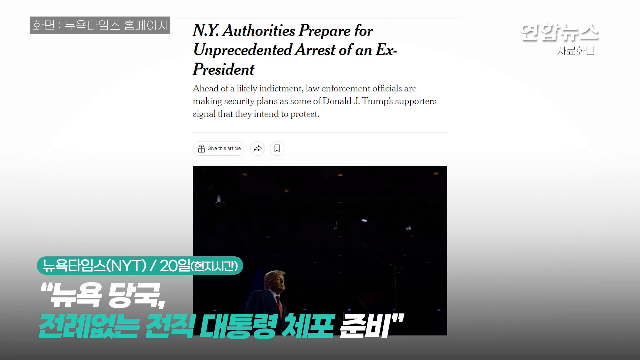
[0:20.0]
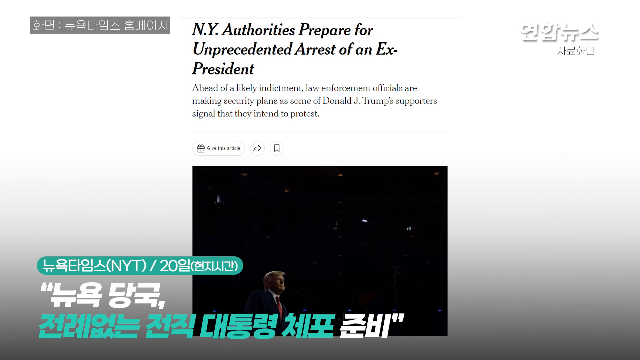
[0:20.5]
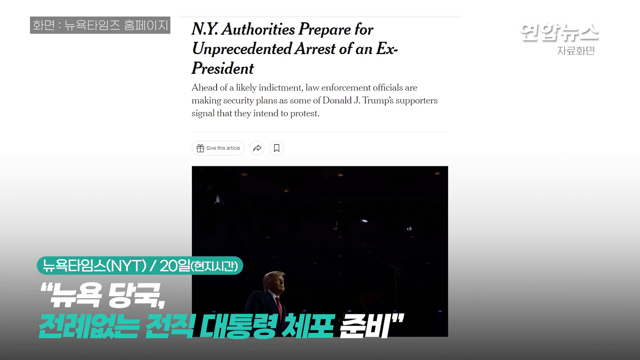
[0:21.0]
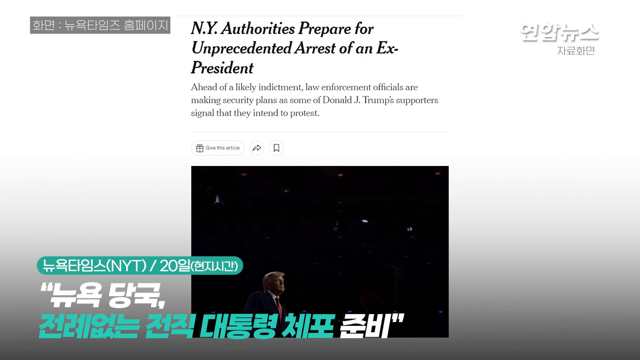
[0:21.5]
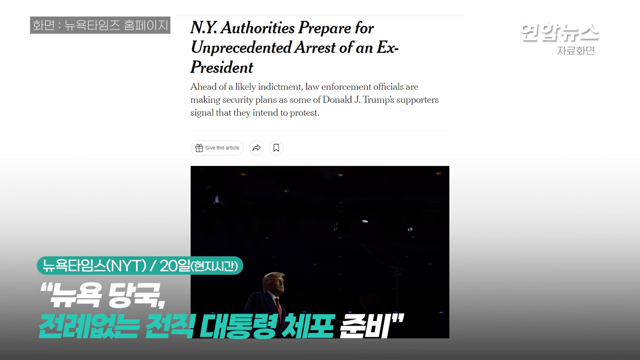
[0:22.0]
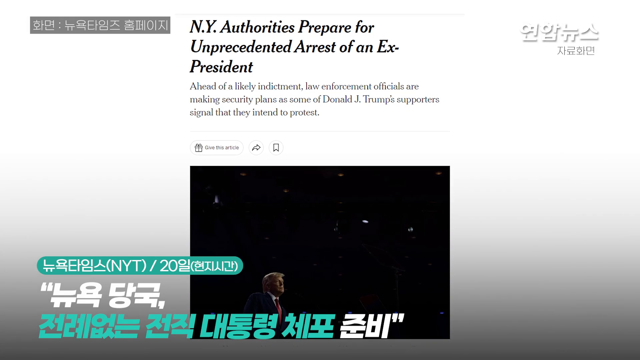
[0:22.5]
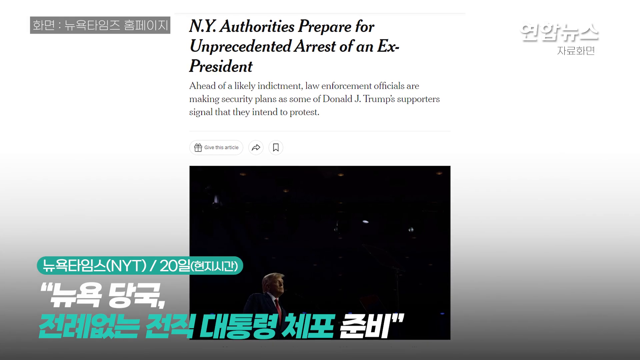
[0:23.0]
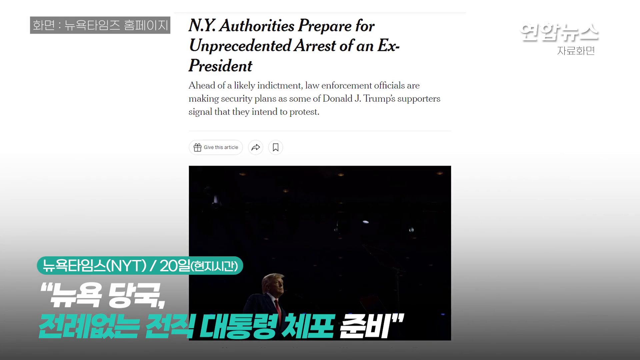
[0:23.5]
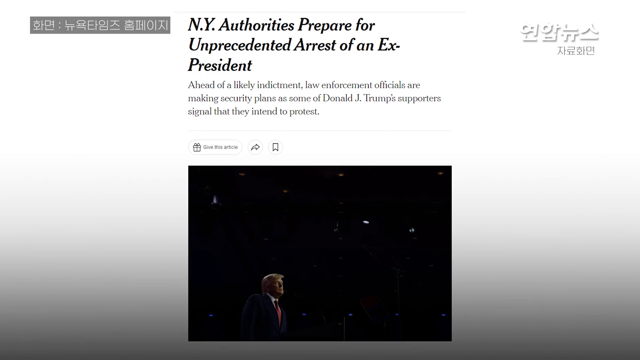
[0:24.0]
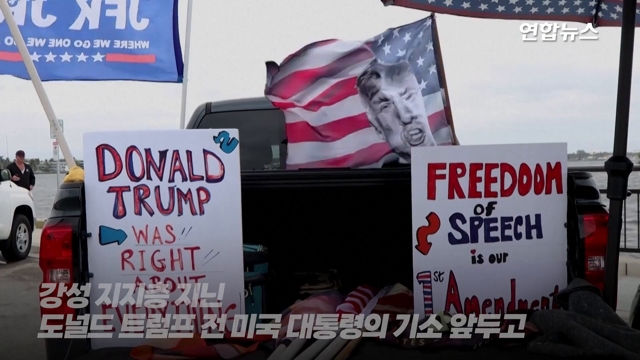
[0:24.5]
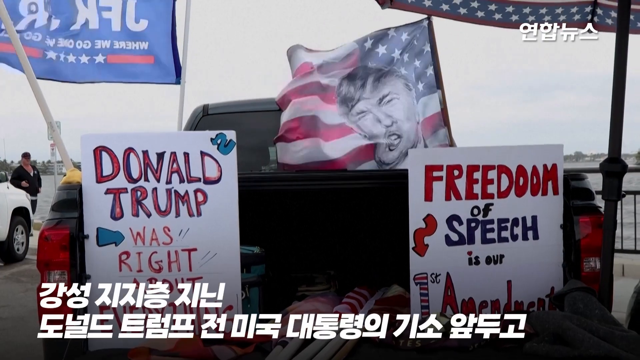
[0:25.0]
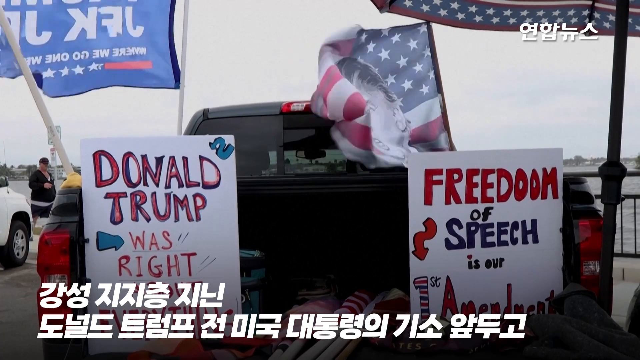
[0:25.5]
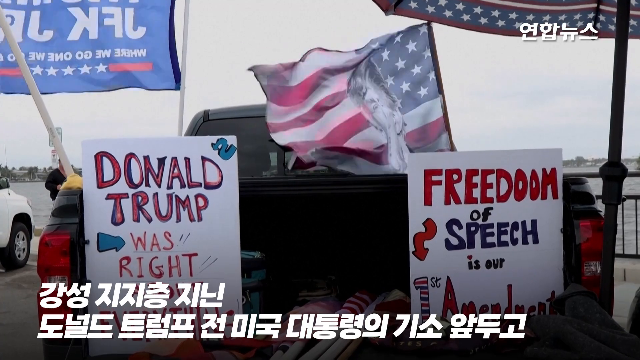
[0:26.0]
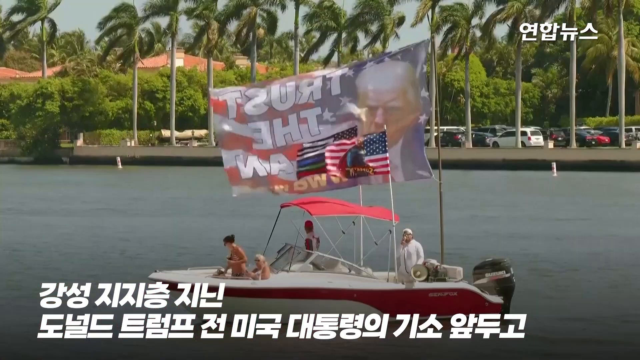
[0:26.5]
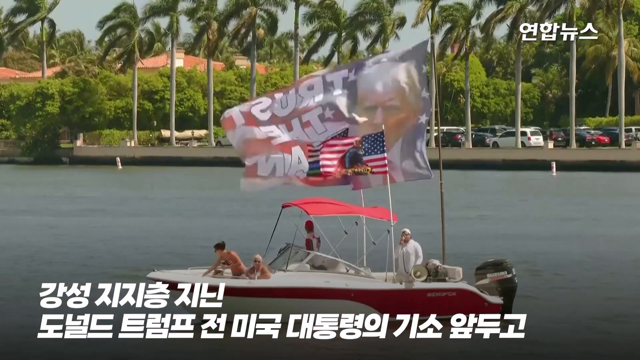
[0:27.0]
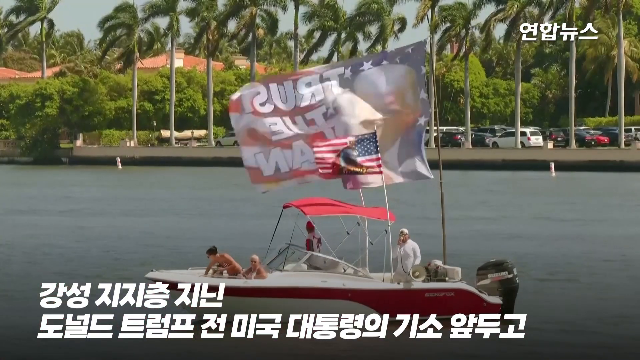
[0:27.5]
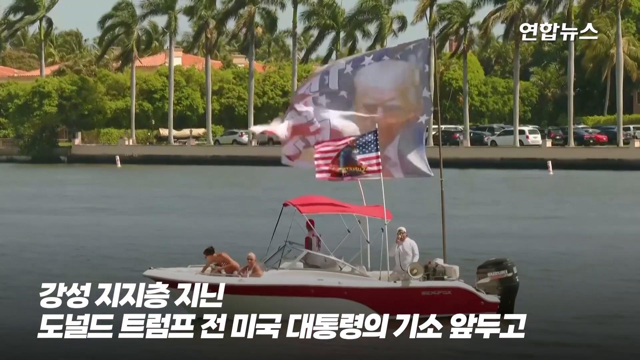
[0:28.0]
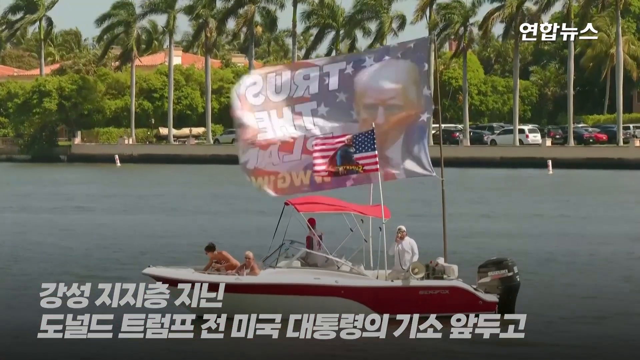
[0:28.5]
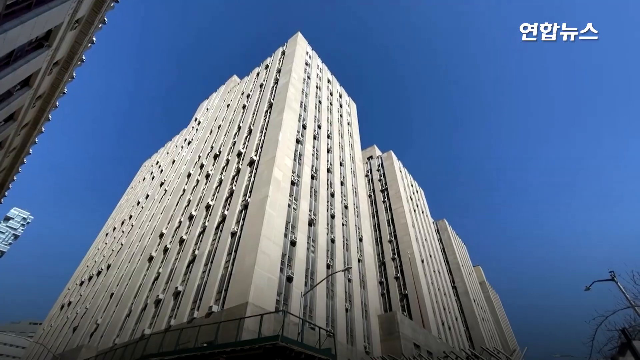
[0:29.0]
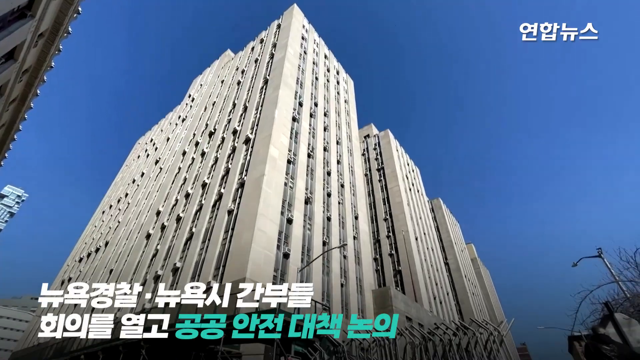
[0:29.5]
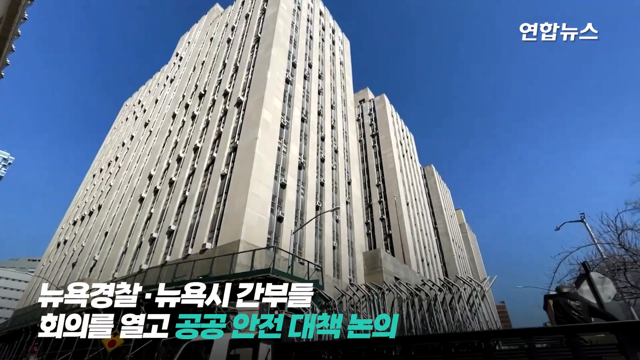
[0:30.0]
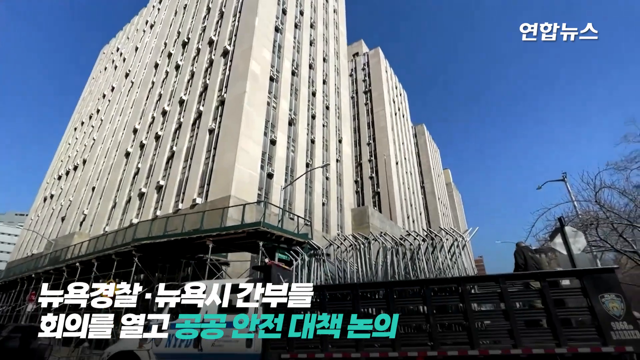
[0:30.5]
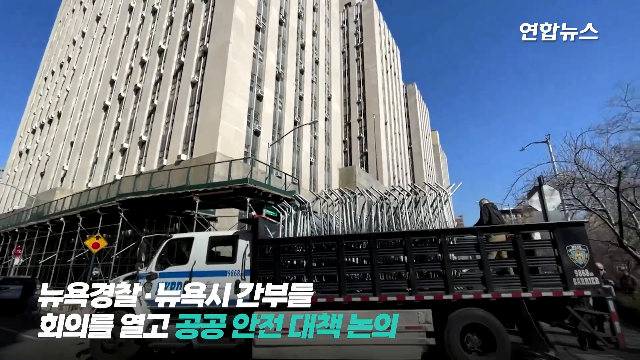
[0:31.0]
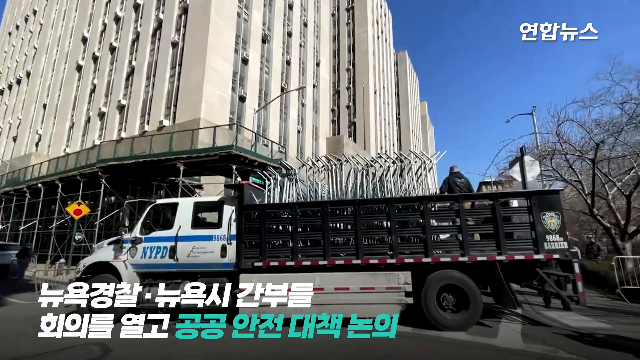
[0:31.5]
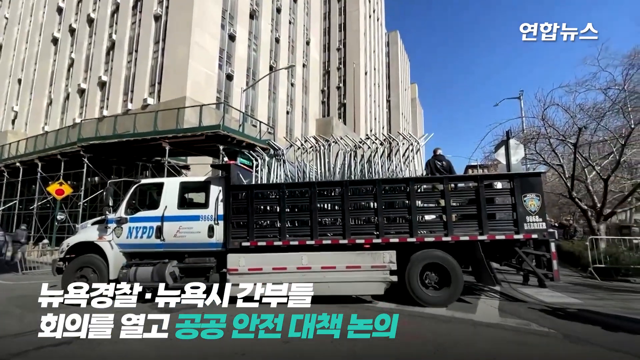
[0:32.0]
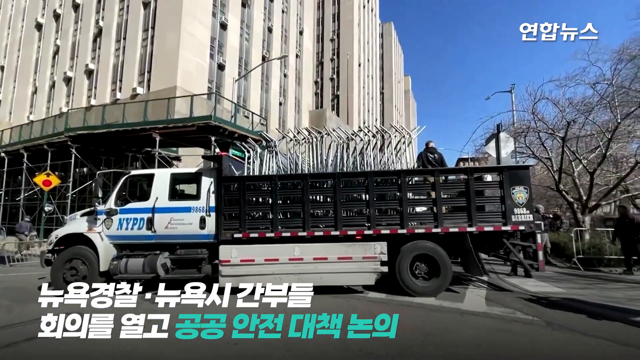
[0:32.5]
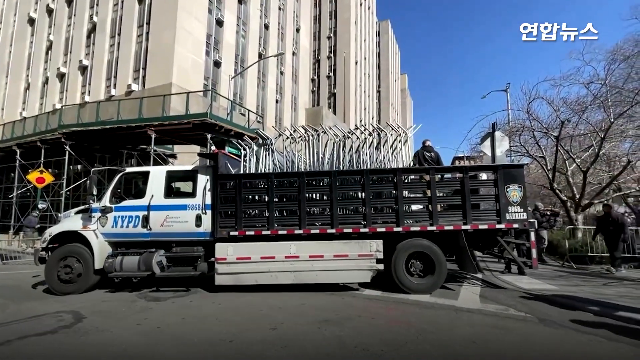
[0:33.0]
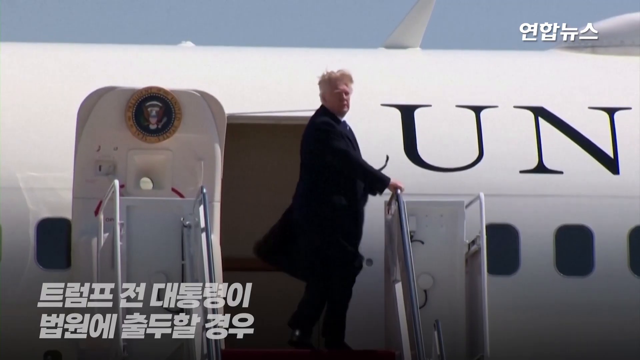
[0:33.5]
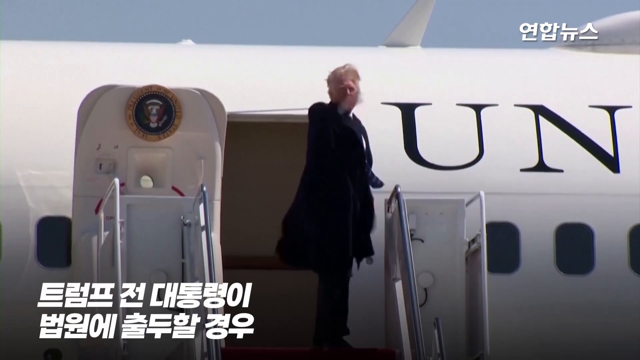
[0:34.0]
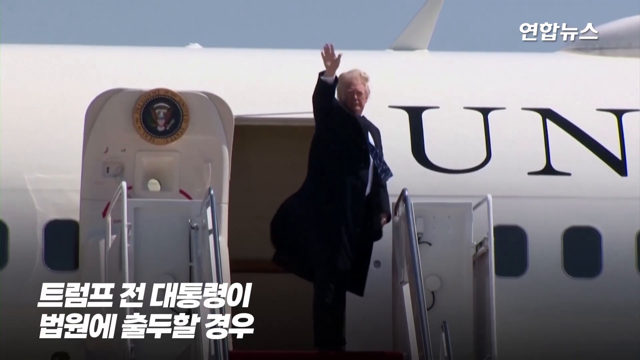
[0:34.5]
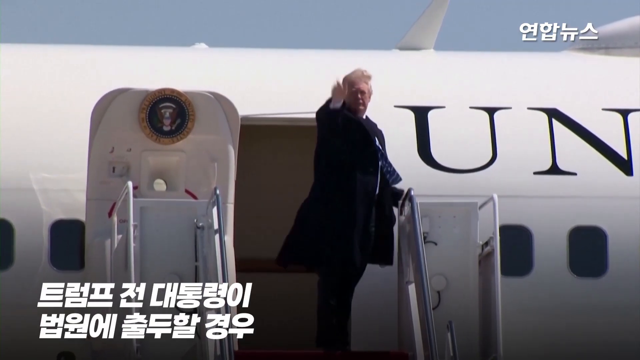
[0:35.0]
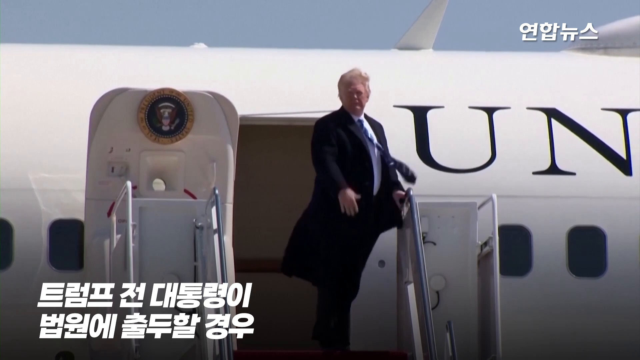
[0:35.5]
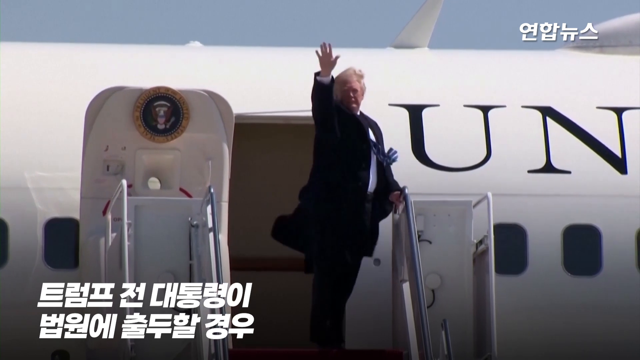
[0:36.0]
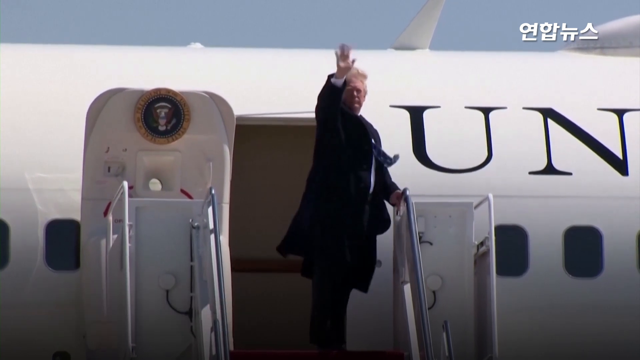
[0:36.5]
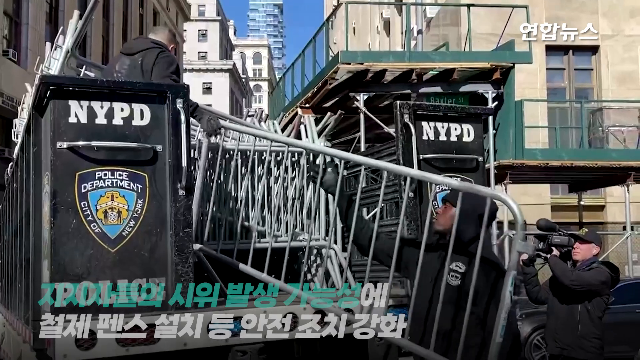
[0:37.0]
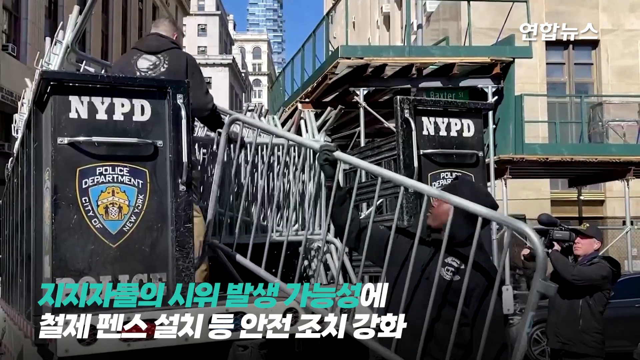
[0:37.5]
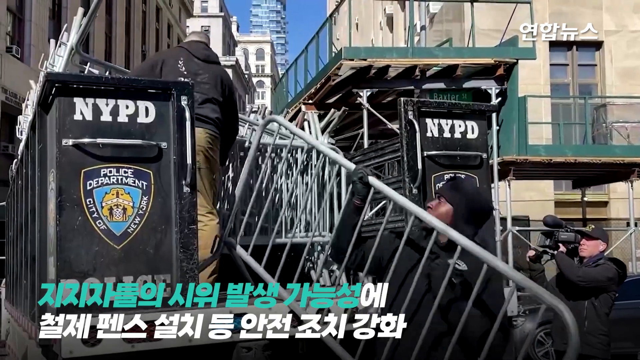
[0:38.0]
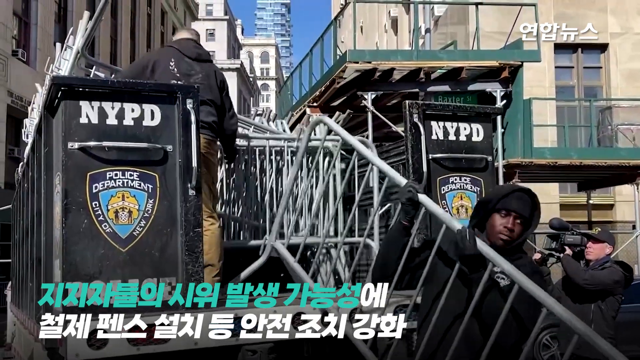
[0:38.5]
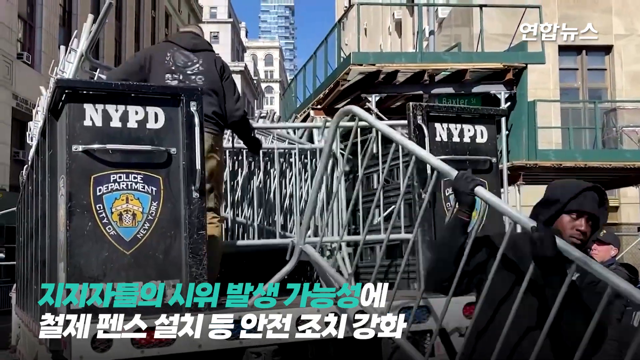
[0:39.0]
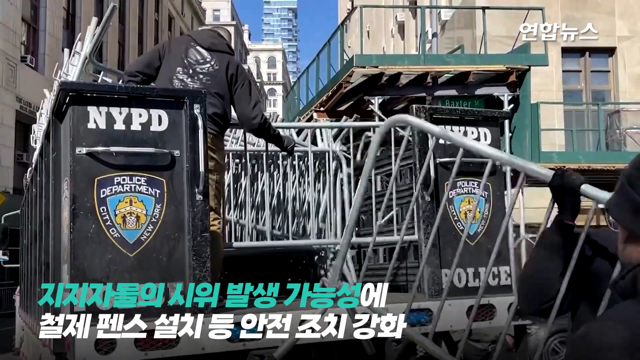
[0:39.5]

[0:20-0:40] The newscast shows text on screen: "New York authorities prepare for unprecedented arrest of an ex-president. Ahead of a likely indictment, law enforcement officials are making security plans as some of Donald J. Trump's supporters signal that they intend to protest." There is a glimpse of Mar-a-Lago, and then the video returns to New York City, where barricades are being put up by the New York Police Department. A tweet about "freedom of speech is our First Amendment right" appears. Donald Trump is seen aboard Air Force One, then NYPD officials are shown putting up barricades, followed by text about law enforcement officials making security plans ahead of a likely indictment as some of Donald J. Trump's supporters signal that they intend to protest.